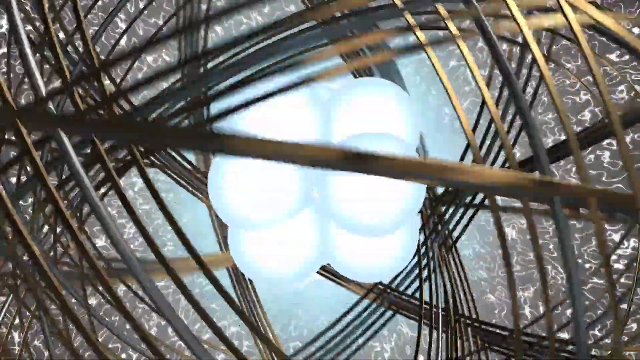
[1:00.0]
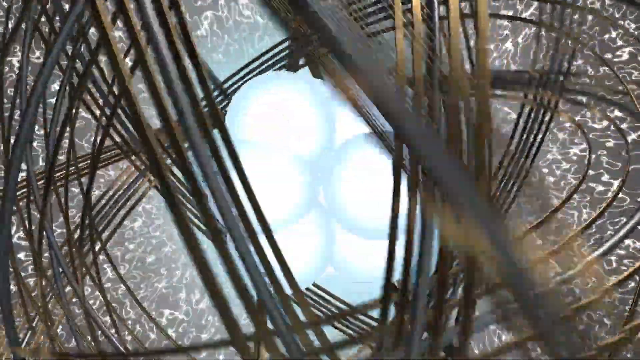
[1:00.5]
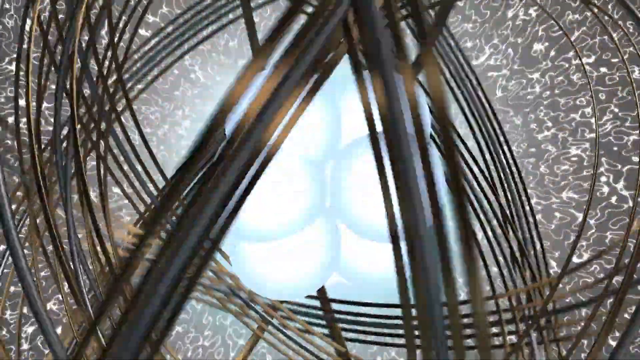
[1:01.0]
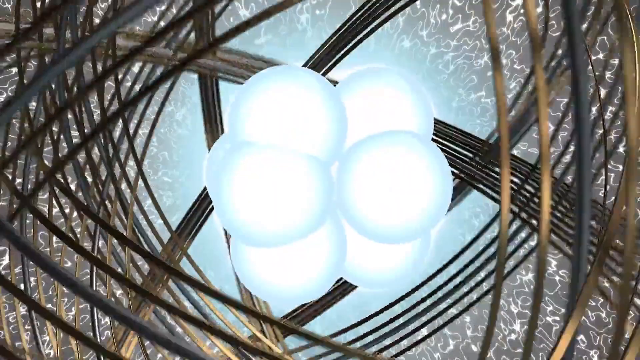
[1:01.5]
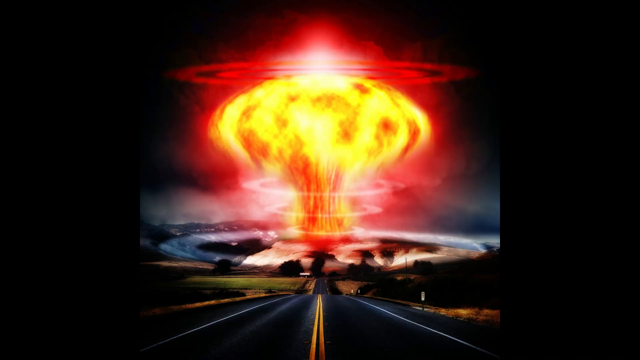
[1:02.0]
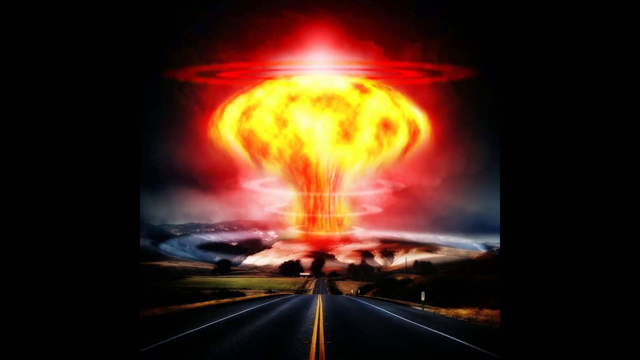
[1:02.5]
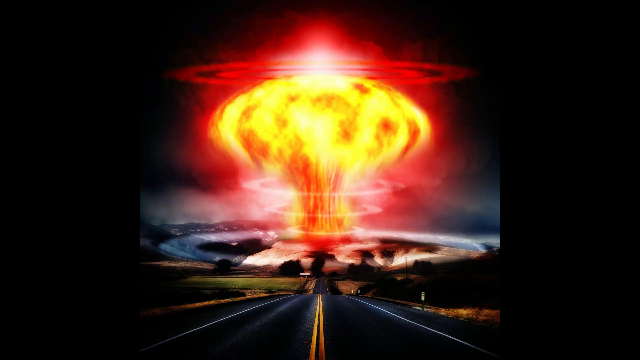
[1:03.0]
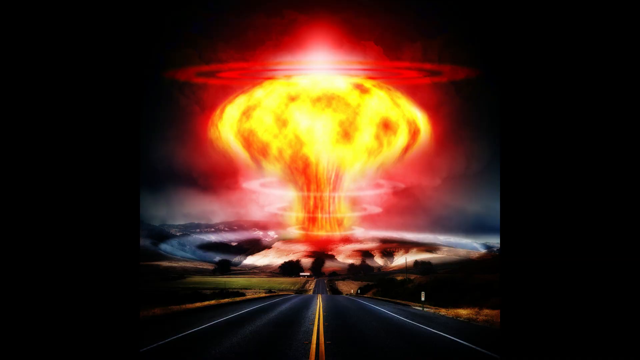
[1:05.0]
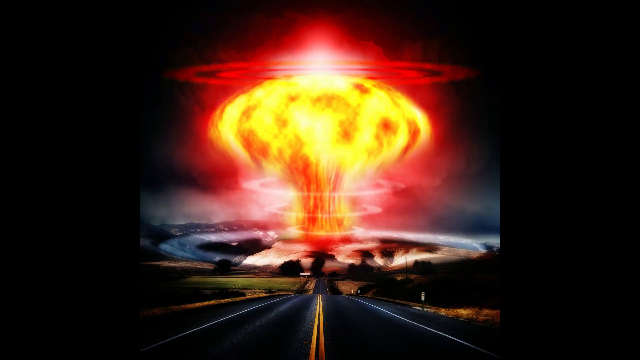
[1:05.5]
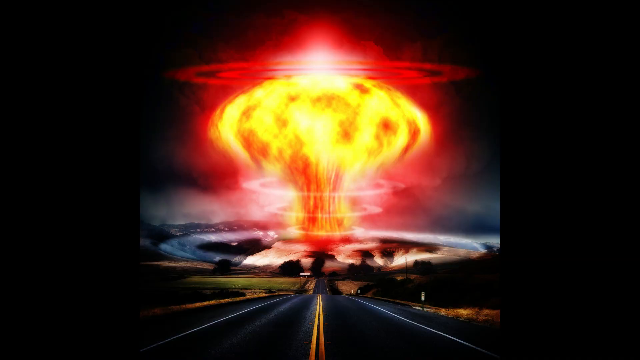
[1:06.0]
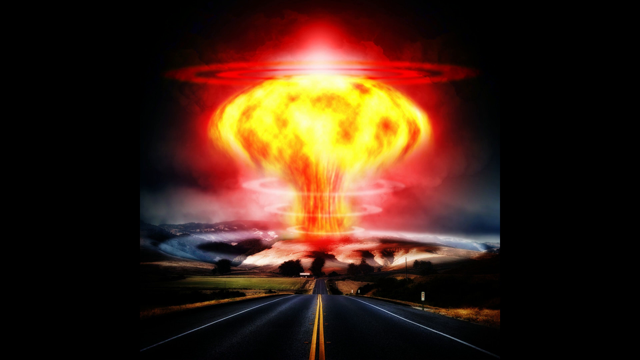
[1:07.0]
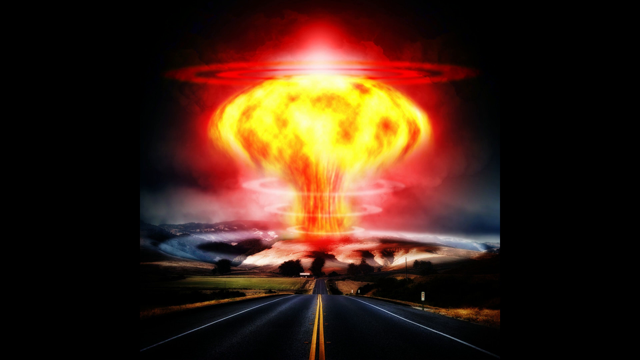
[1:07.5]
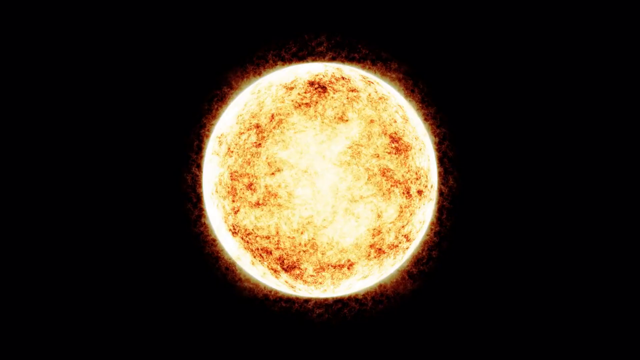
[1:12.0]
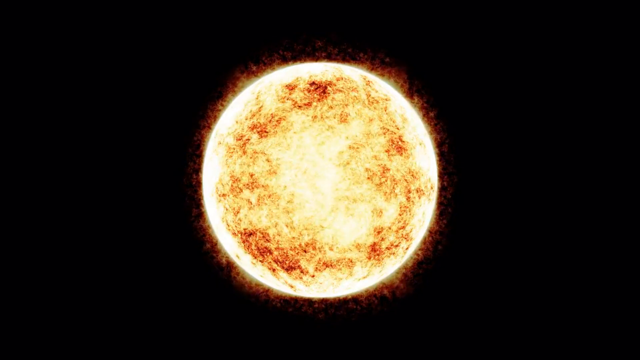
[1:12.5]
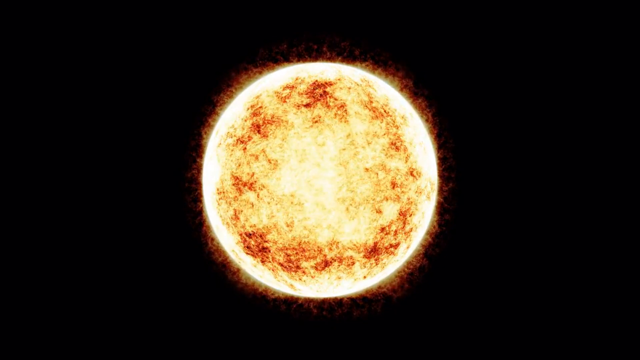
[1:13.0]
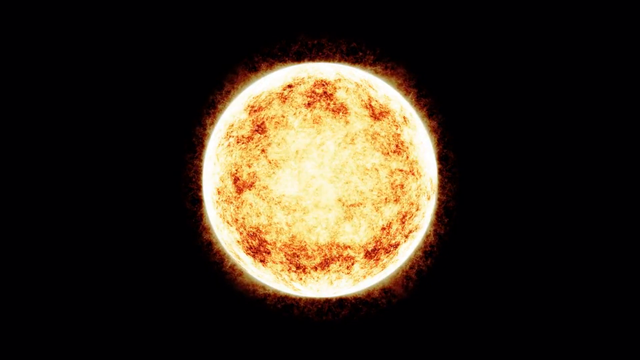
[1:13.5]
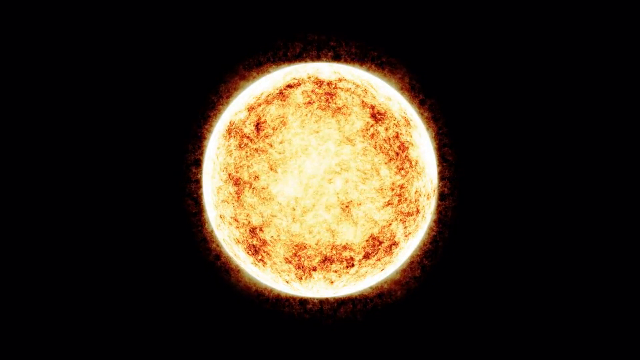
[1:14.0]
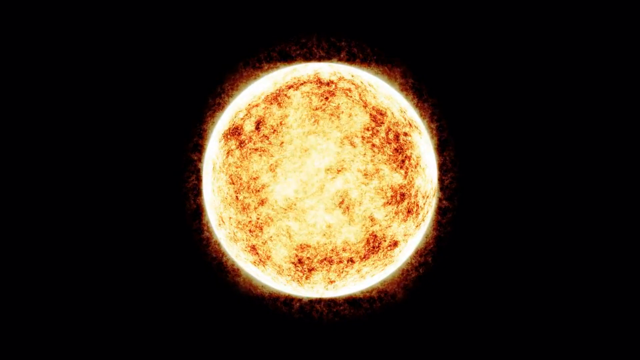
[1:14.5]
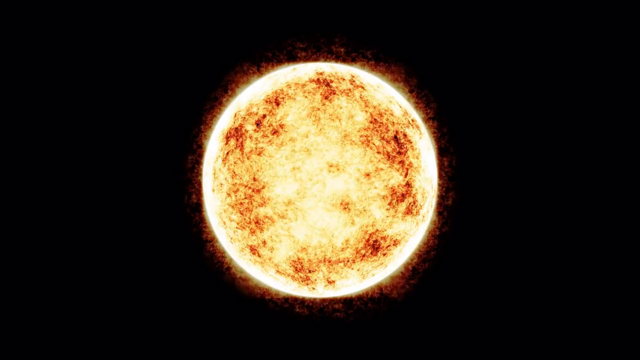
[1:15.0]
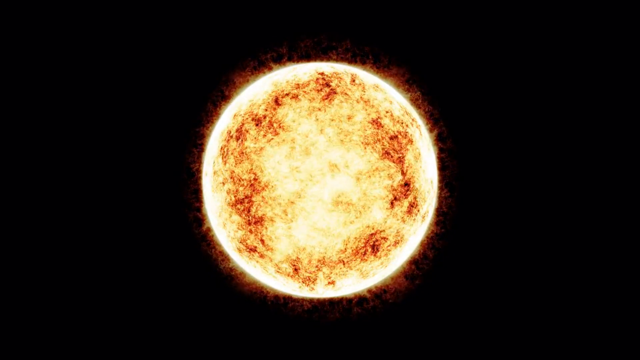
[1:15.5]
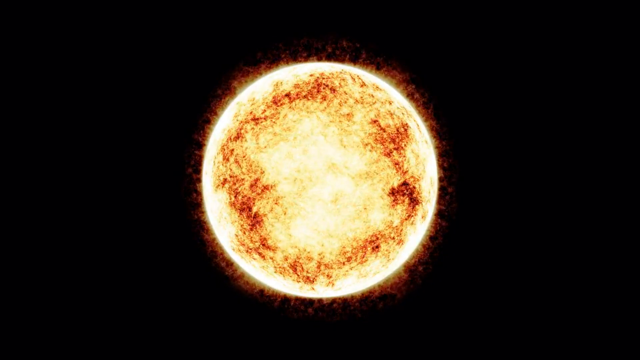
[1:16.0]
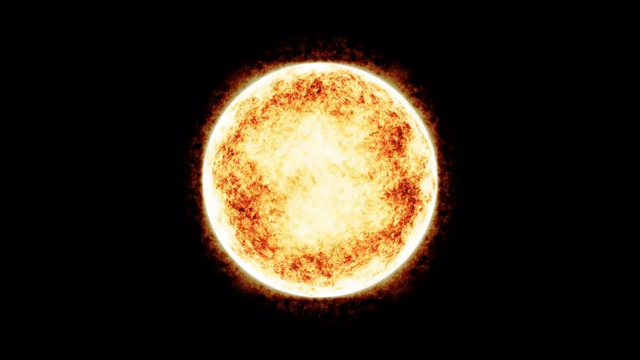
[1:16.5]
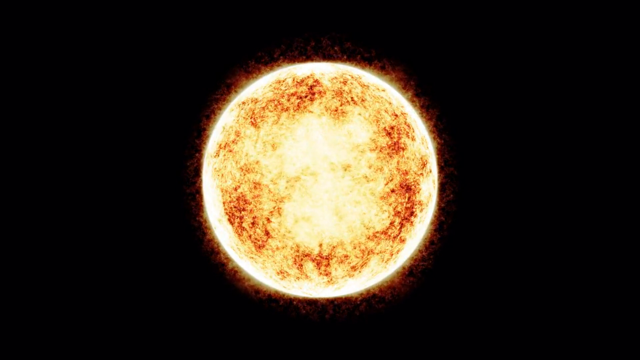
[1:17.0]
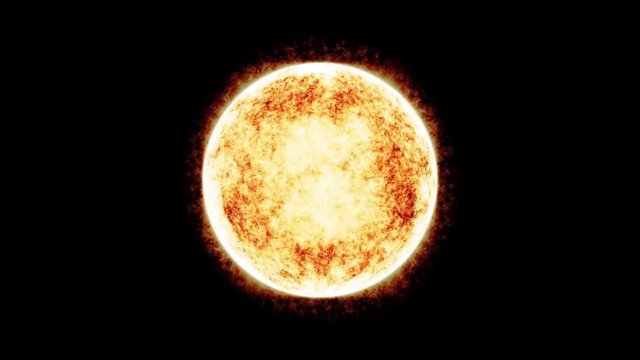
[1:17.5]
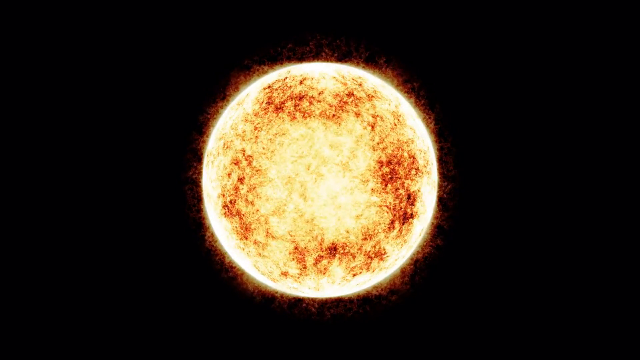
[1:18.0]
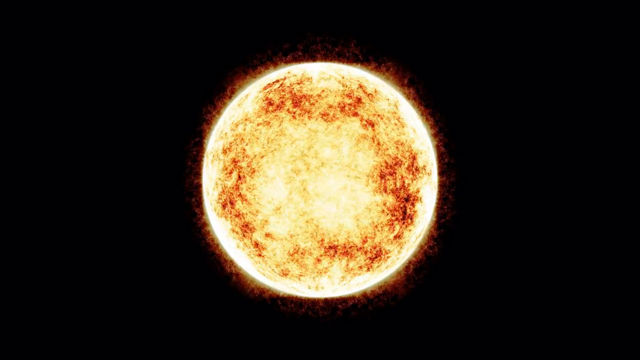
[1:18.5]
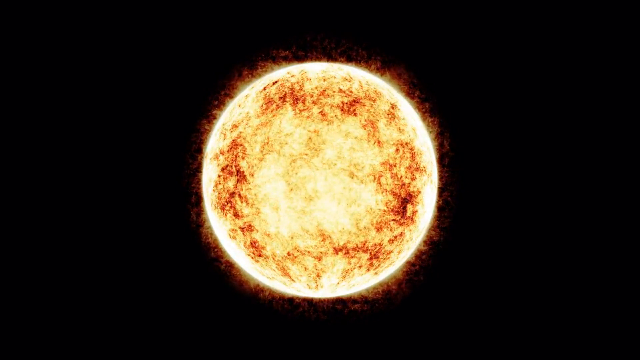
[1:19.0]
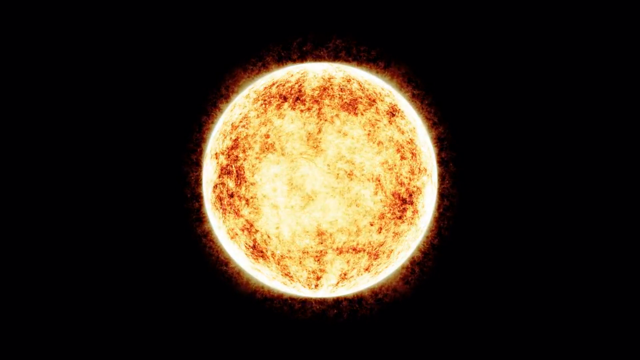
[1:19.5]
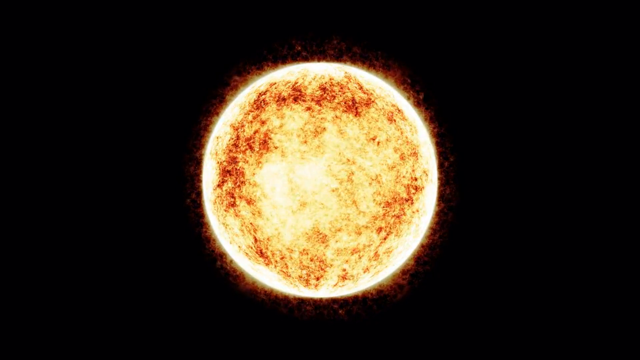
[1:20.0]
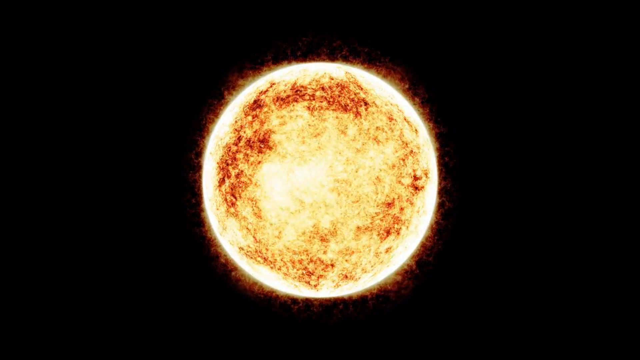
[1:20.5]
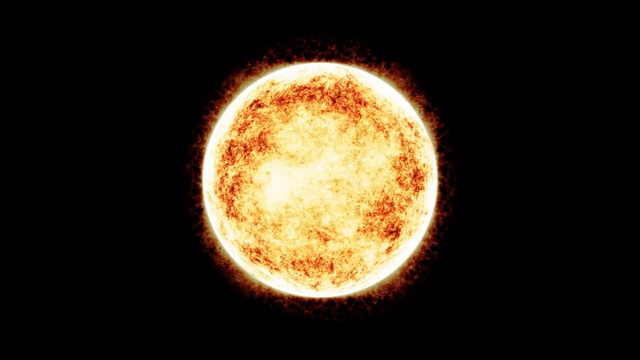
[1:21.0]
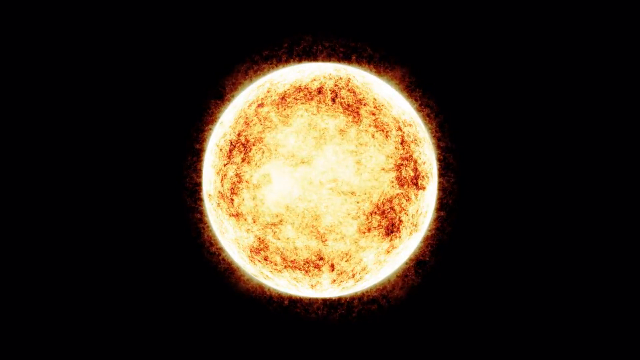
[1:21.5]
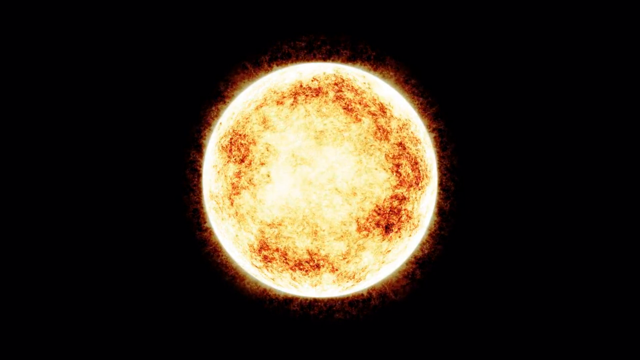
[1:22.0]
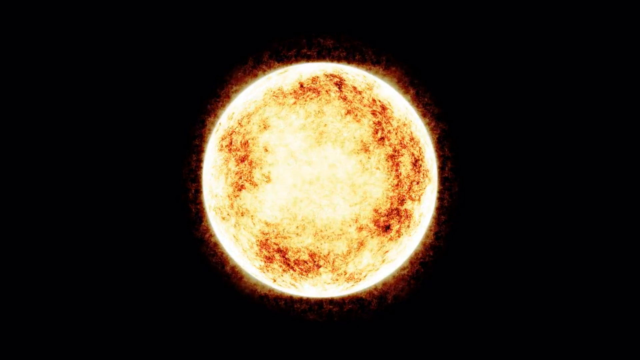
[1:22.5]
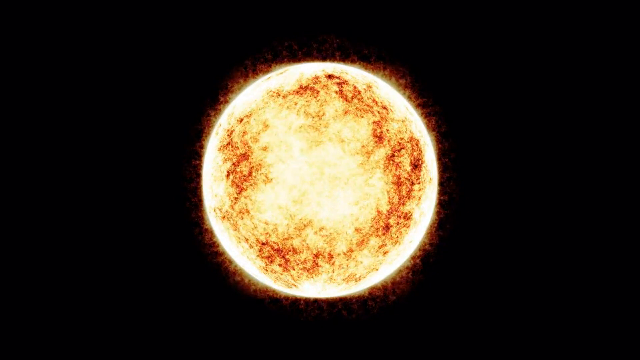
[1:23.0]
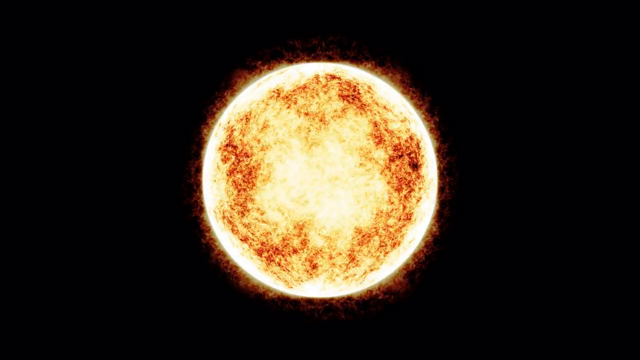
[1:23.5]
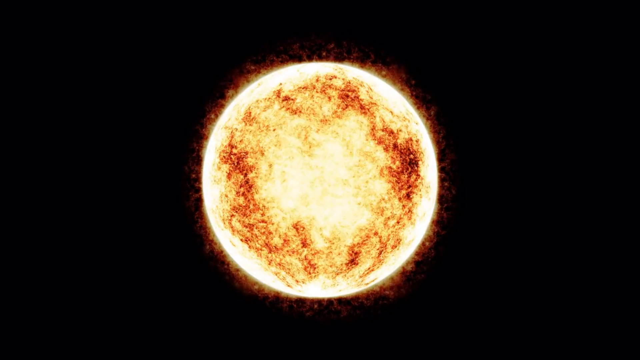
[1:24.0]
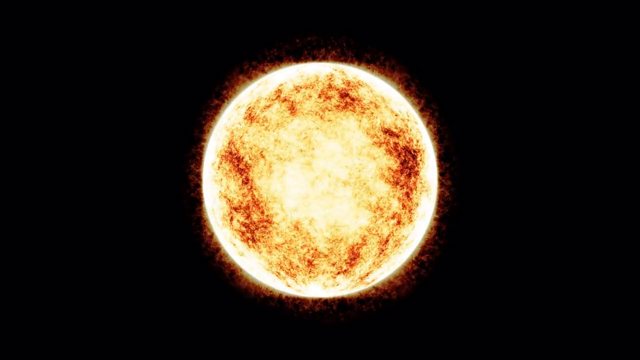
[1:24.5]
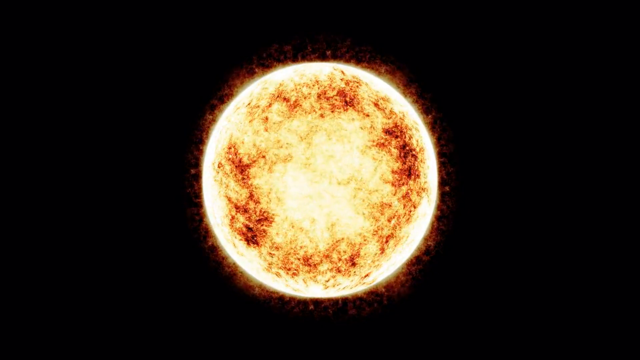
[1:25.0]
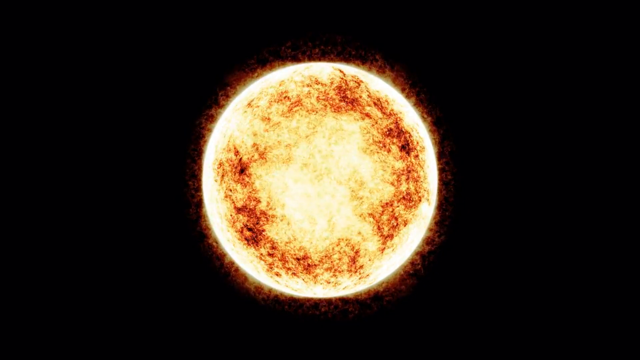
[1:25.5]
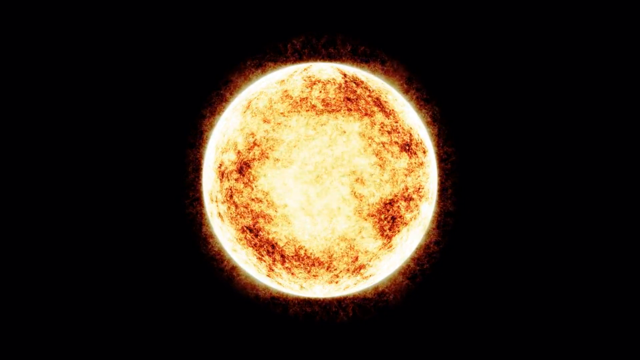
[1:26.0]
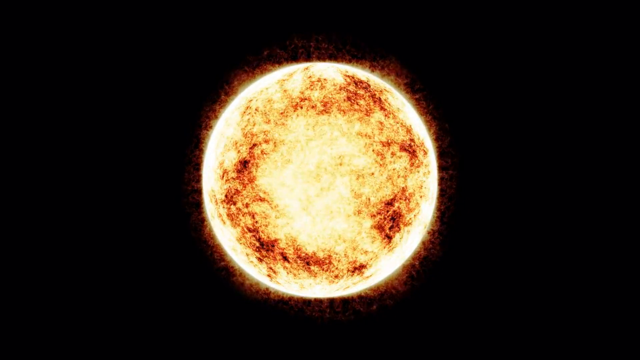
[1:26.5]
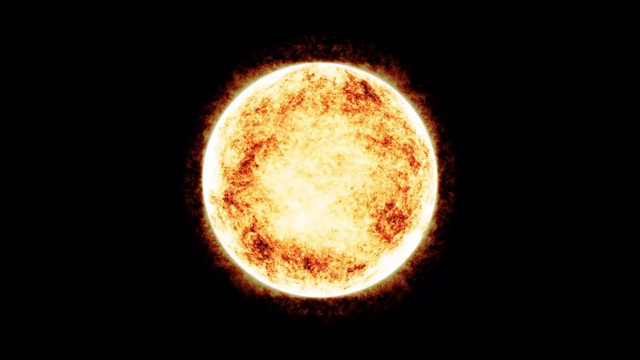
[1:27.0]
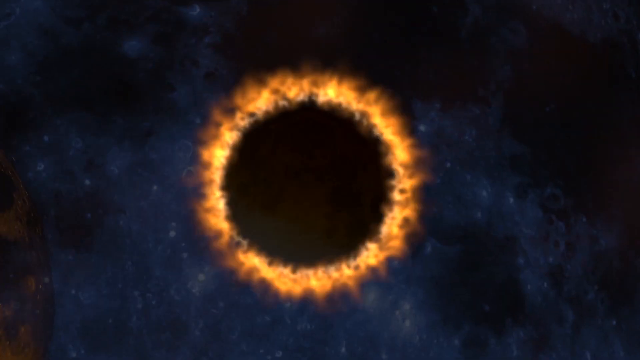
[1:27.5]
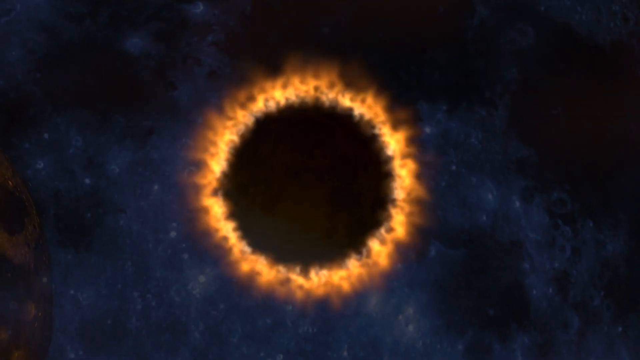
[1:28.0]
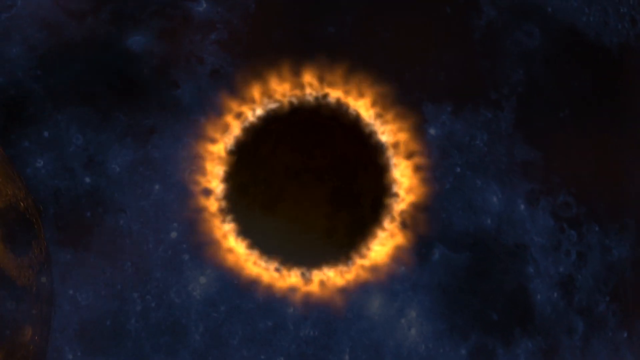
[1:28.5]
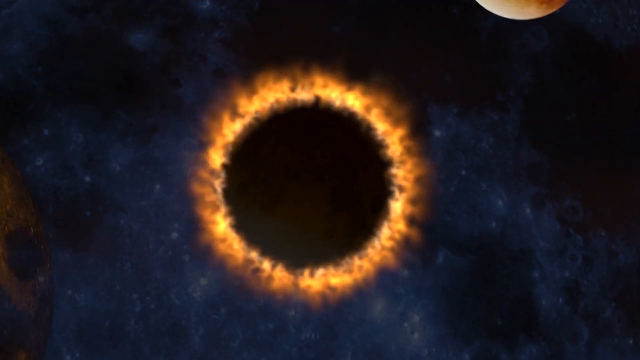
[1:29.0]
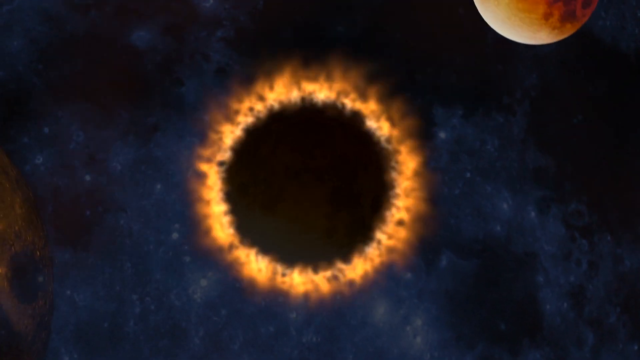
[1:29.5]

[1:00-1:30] The black and white background continues behind a brightly lit center with six bluish-white balls bunched together. Around the outside is a lot of copper wiring that almost looks like coils, going 360 degrees around; there are probably 30 of them, spread out a little differently and twisting and turning in all sorts of directions as the middle portion grows a little bigger, with a black border on the left and right. The video then shows a two-lane road with a red line down the center, and in the far distance, about a third of the way up, grass on the left and right. Smoke and a sonic wave go across the bottom, and rising from it in the center is red and yellow fire that spreads out very wide to the left and right in a big mushroom effect, with a red hue in the black sky around it. At the top are two small, kind of red circles around it, almost like the rings of Jupiter, expanding outward like a sonic boom. Toward the bottom, as it explodes upward, three pink rings surround the slimmer portion. The video cuts back to the sun on a completely black background, with an orangish-yellow hue around the edges, a yellow border, and red, orange and yellow in the center. Its flames visibly move and pulsate; sometimes the oranges turn redder and the reds turn more orange. Then it goes to the black circle in the night sky with red flame around it.